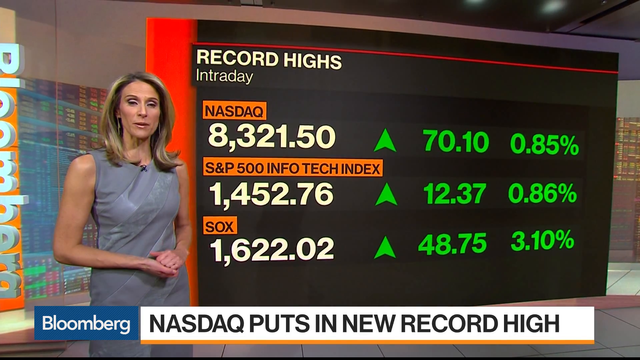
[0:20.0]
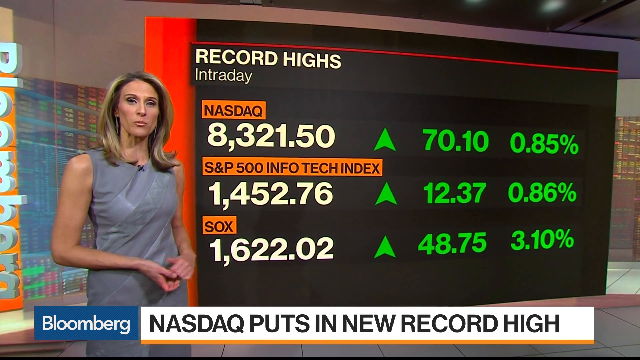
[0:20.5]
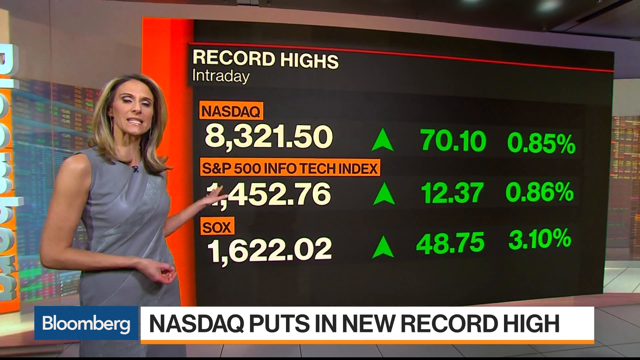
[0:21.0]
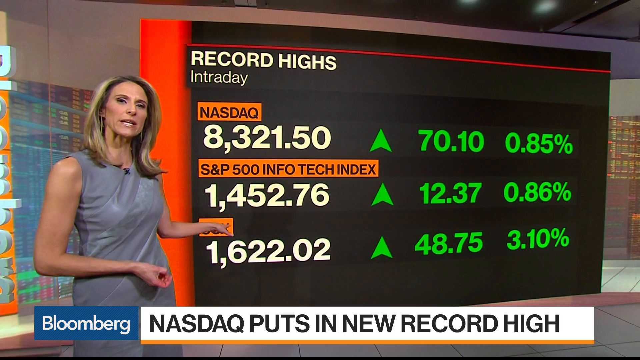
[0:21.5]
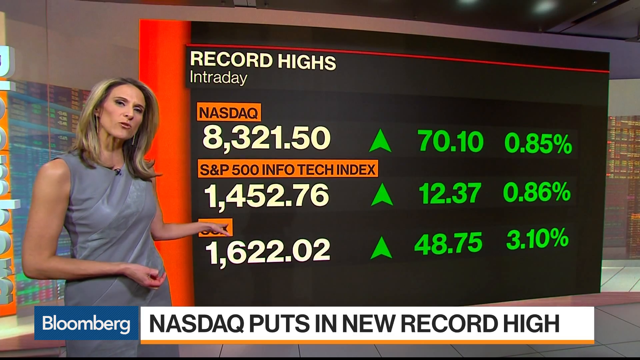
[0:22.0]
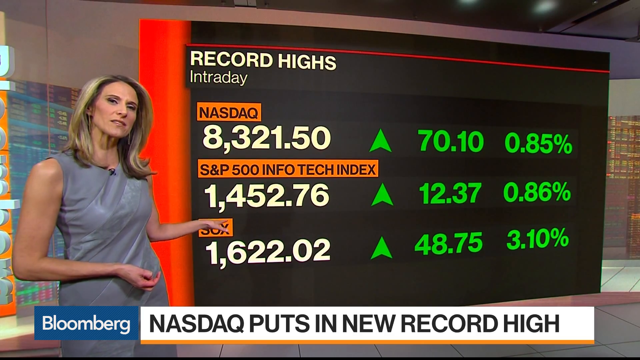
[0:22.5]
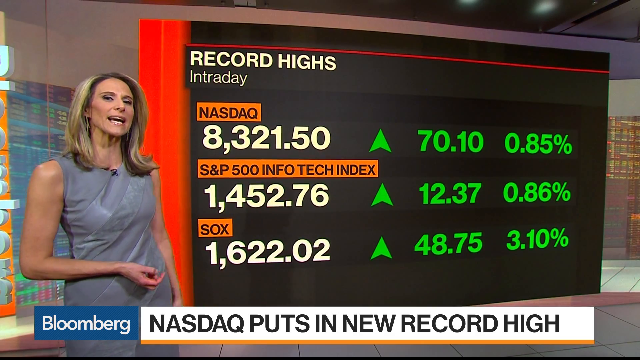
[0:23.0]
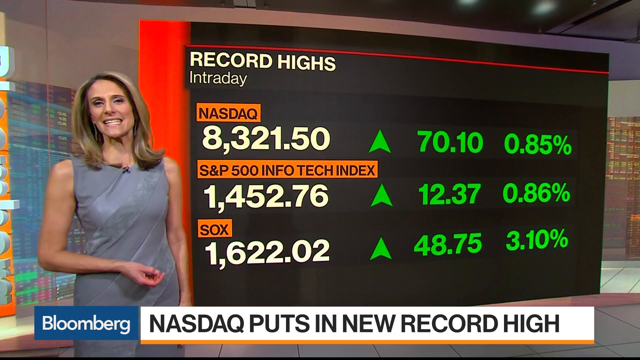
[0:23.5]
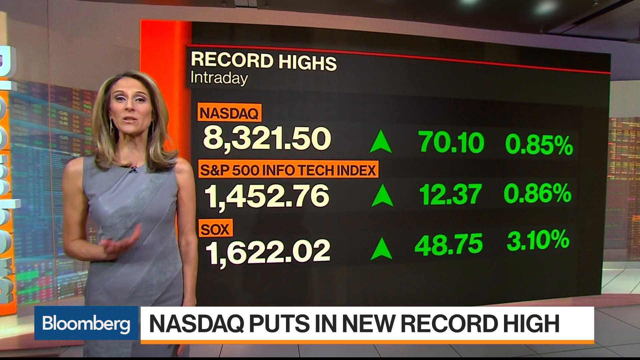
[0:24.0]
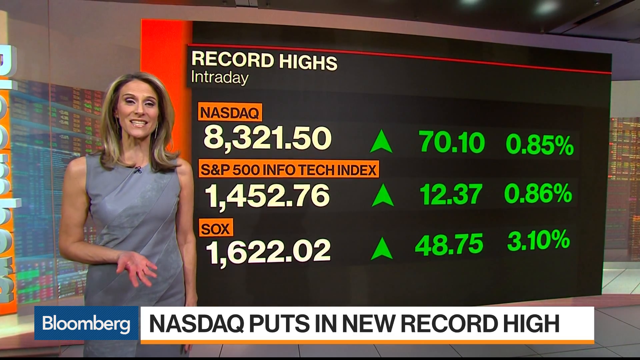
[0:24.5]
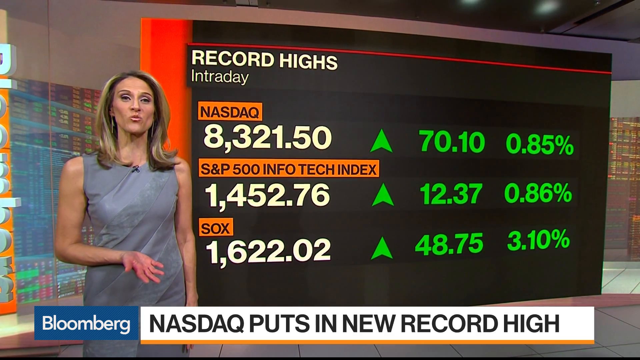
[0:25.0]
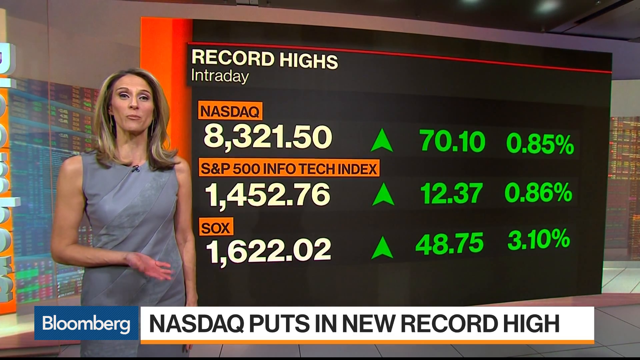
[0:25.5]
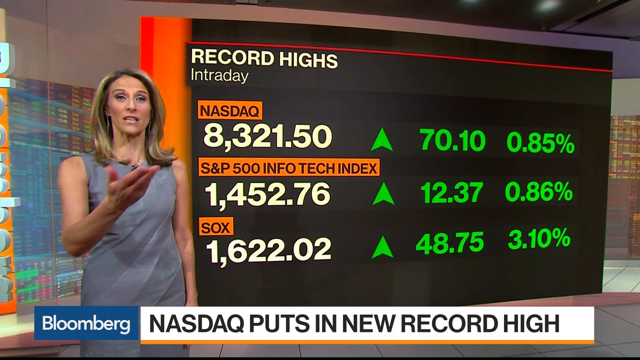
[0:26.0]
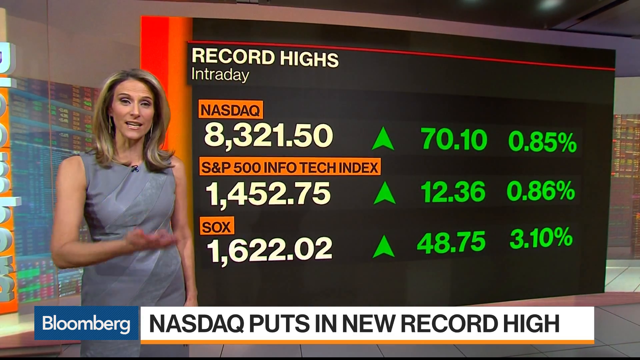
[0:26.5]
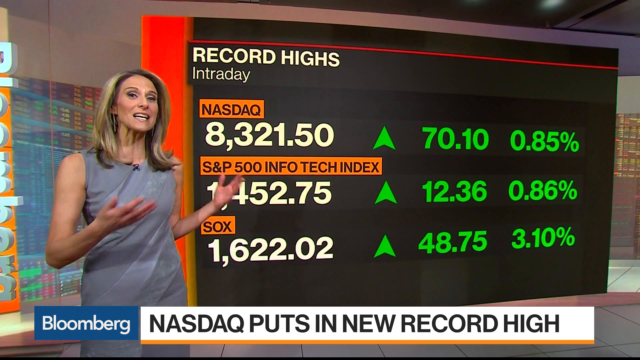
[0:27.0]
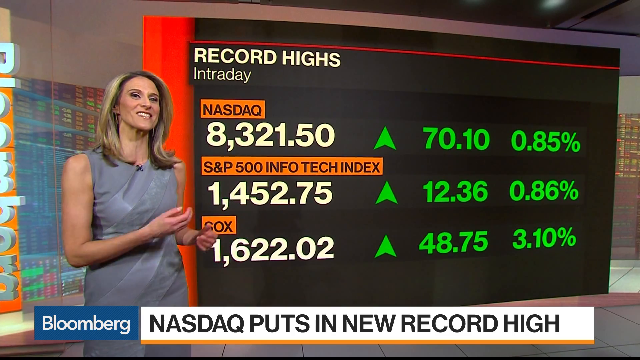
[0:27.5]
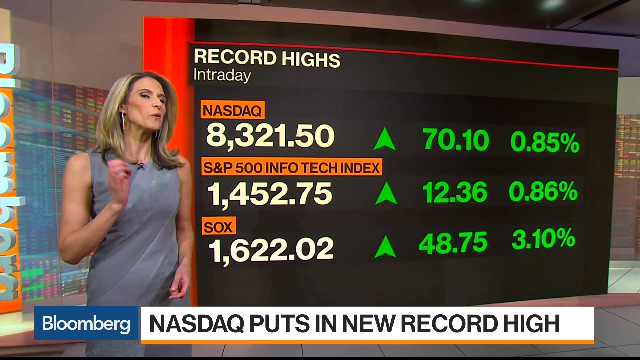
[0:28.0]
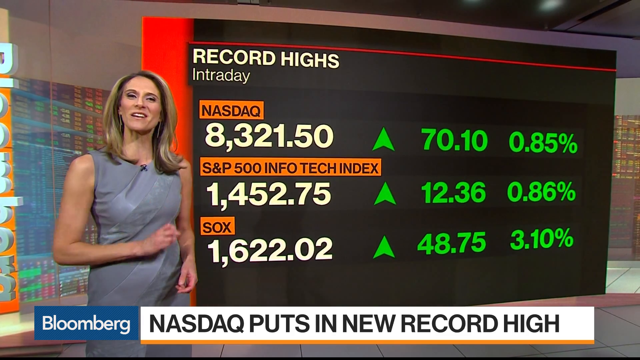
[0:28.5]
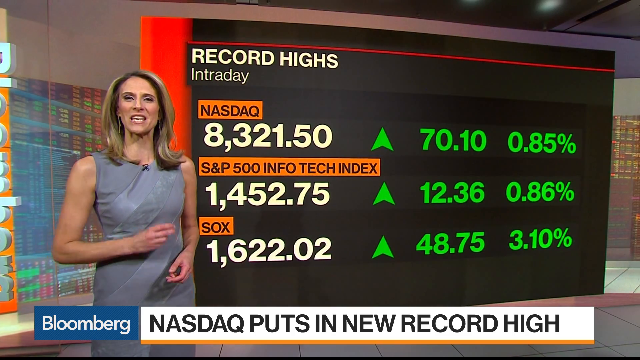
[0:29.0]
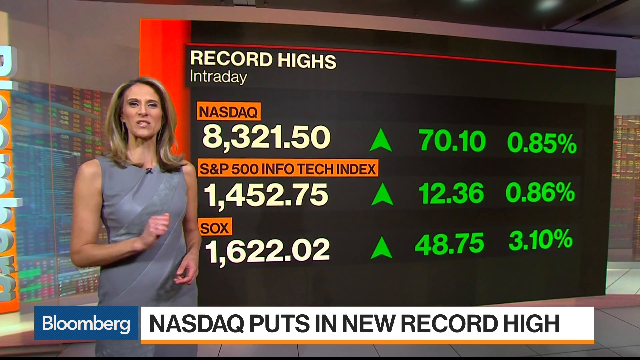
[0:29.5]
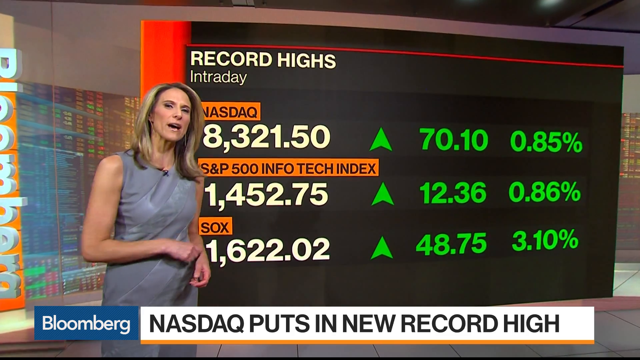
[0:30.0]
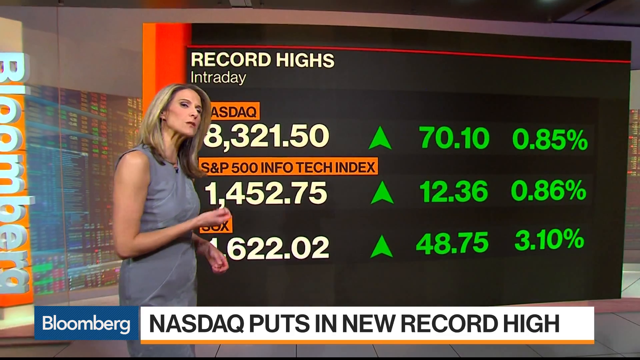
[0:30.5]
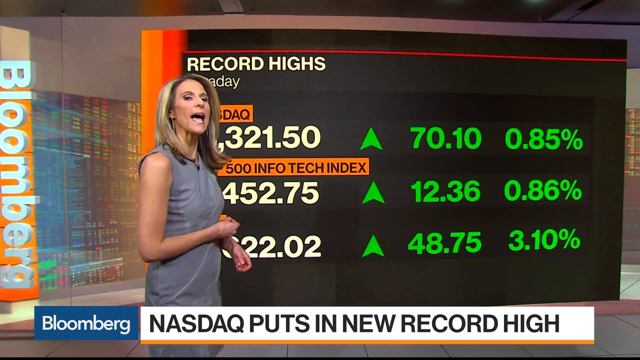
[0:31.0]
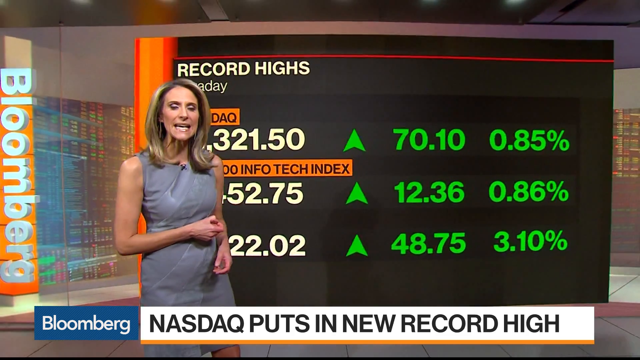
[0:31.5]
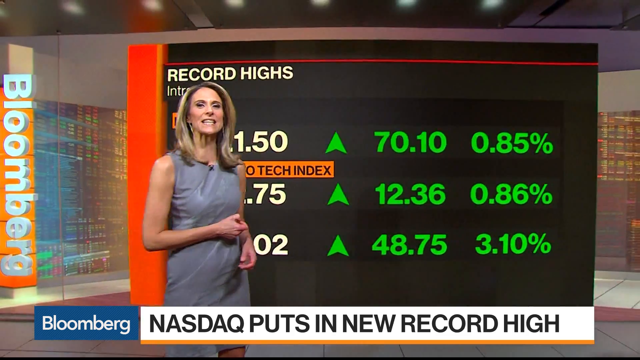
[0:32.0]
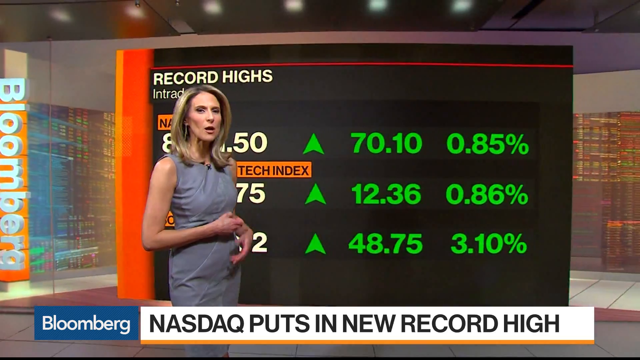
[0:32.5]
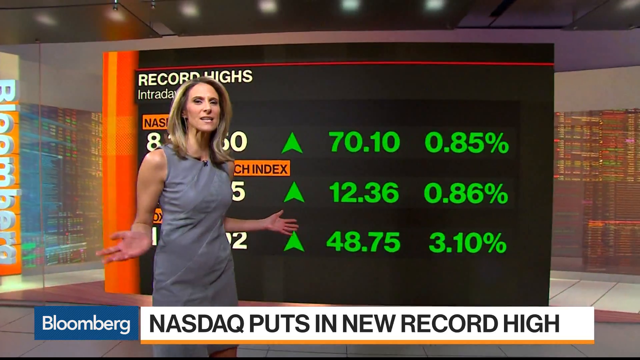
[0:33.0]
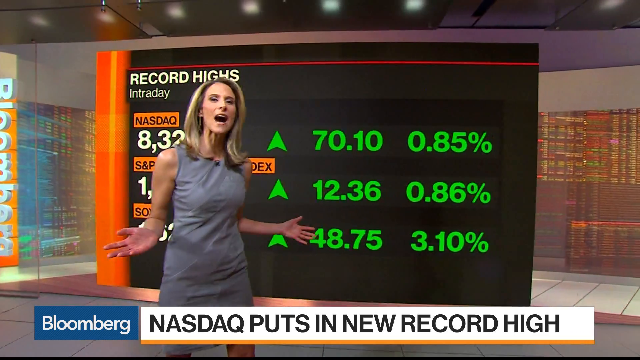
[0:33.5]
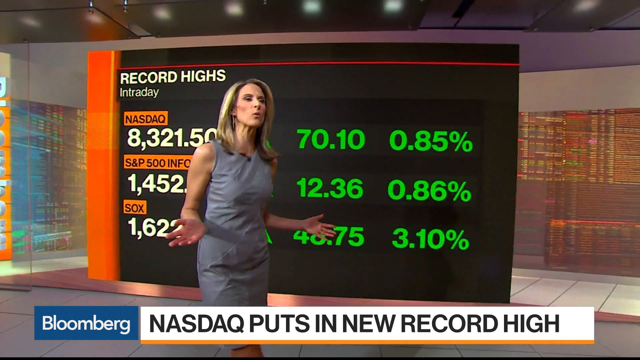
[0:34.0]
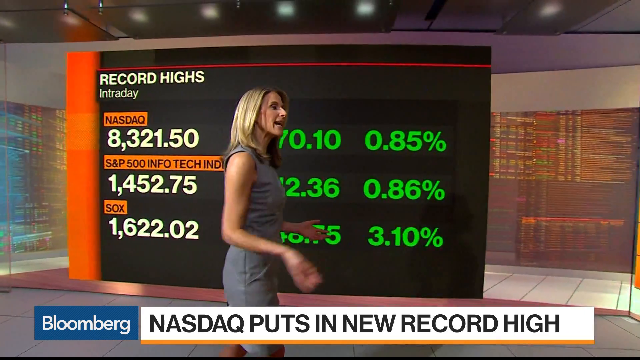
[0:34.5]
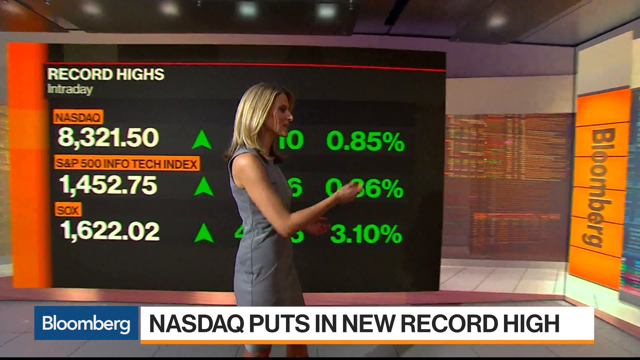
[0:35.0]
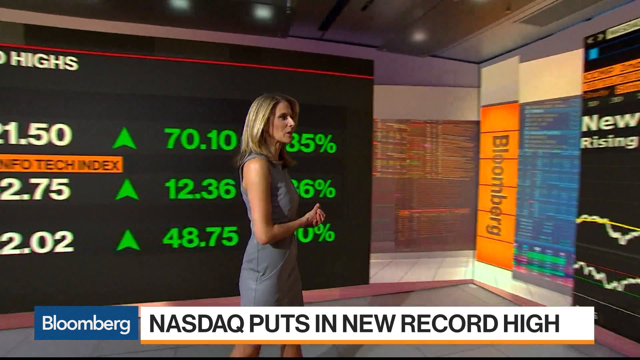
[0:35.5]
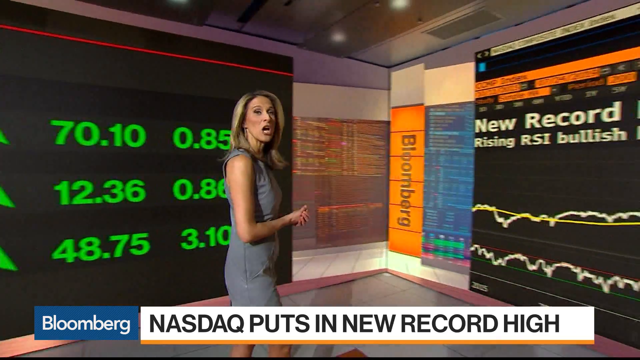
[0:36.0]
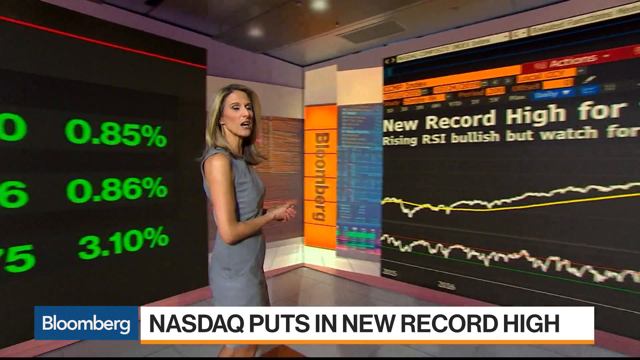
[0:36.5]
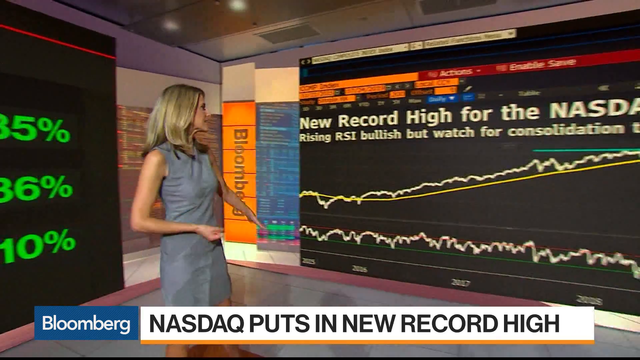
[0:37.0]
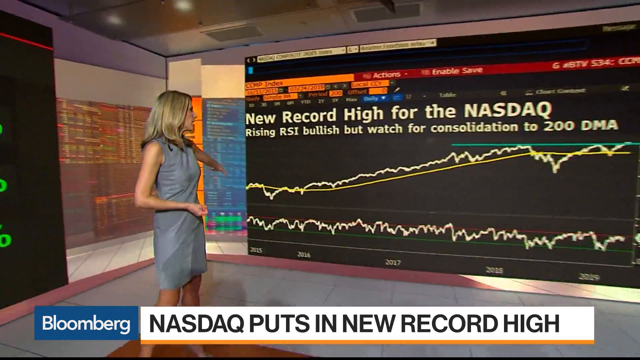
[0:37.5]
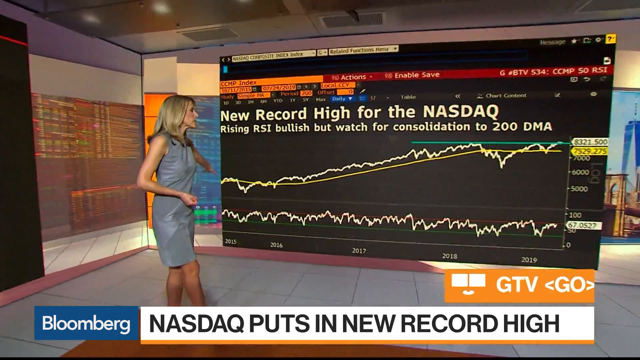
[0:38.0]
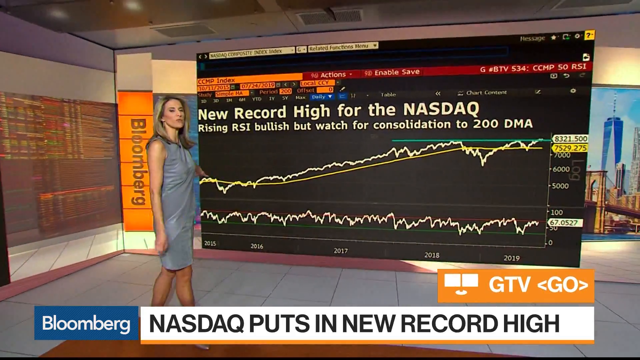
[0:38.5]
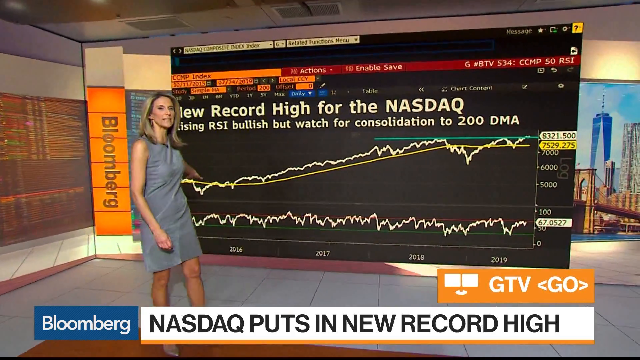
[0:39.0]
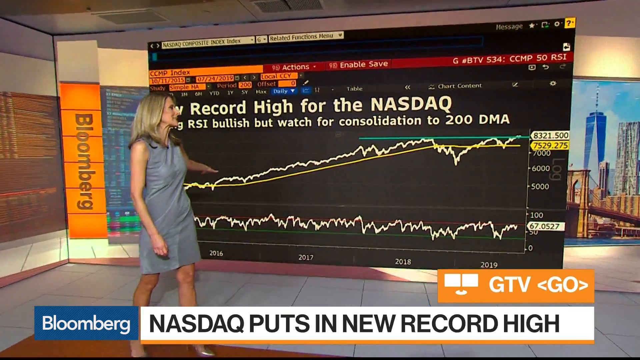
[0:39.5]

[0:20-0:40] The anchor in the gray dress, with dirty blonde shoulder-length hair, stands in front of a green screen displaying the record highs of the NASDAQ and S&P 500 before she saunters off to a different screen showing a graph, apparently of the same information. In front of these screens she talks a lot with her hands. She smiles a bit, and as she walks she points to the graph on the screen. The green screen seems to have a computer screen hooked up to it, so the NASDAQ website or an intraday website with the graph information is visible, along with what looks like an information bar or tab bar at the top of the second screen she stands in front of. This second screen has two white lines separated by a few inches, with the top line going much higher than the bottom line, and a yellow line trending upwards.